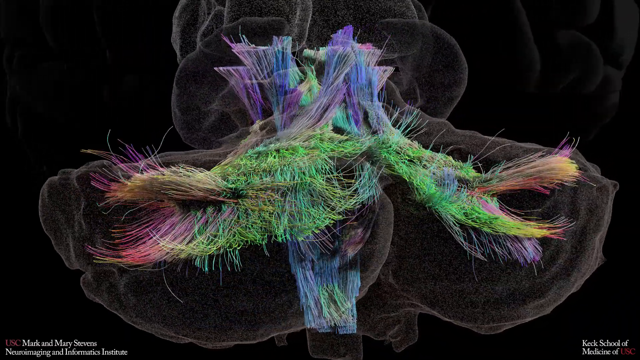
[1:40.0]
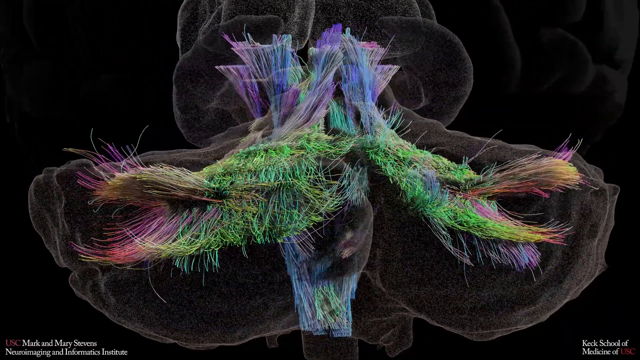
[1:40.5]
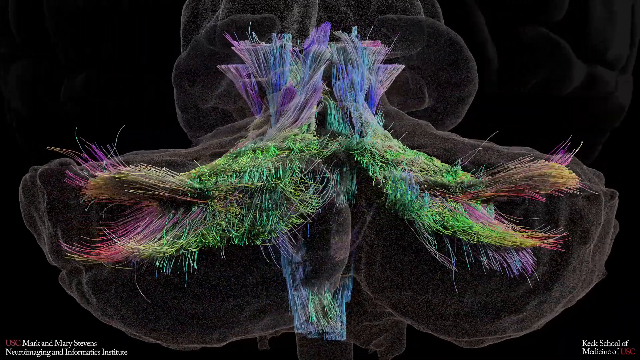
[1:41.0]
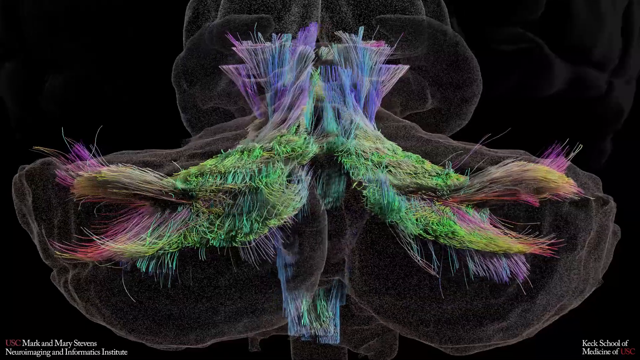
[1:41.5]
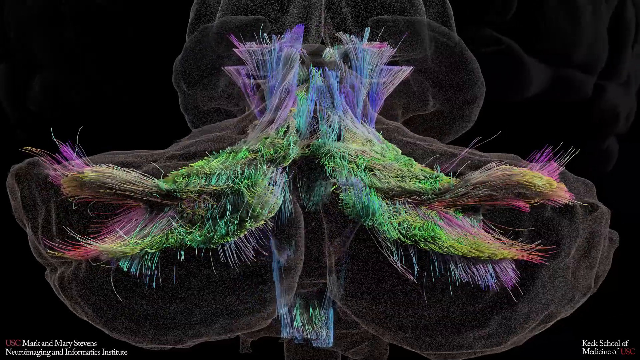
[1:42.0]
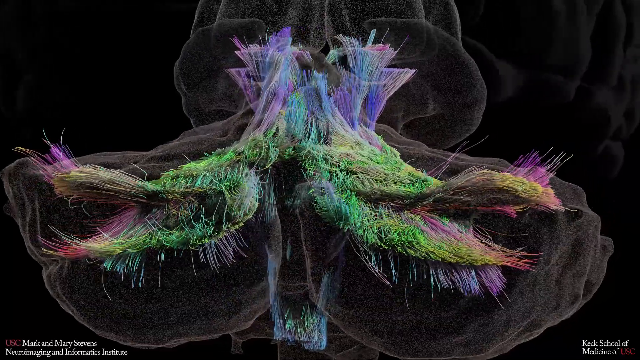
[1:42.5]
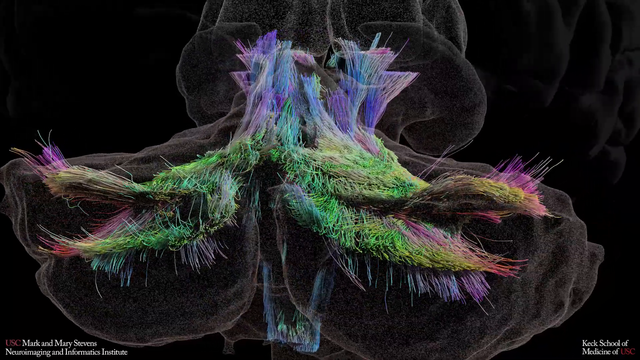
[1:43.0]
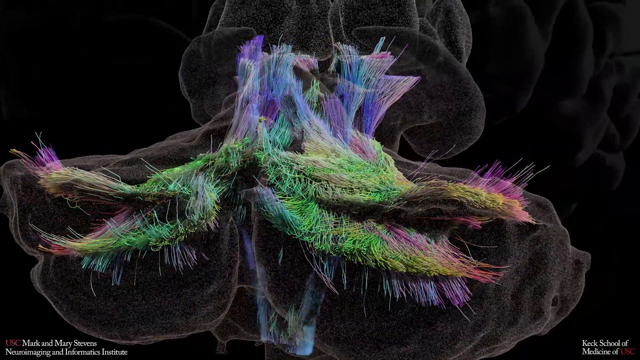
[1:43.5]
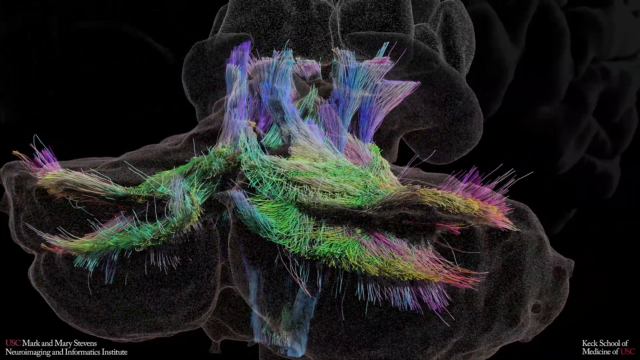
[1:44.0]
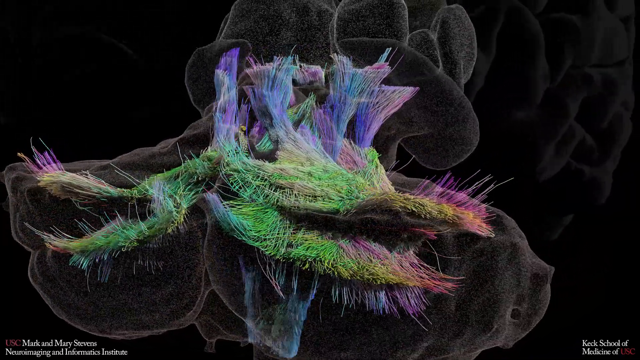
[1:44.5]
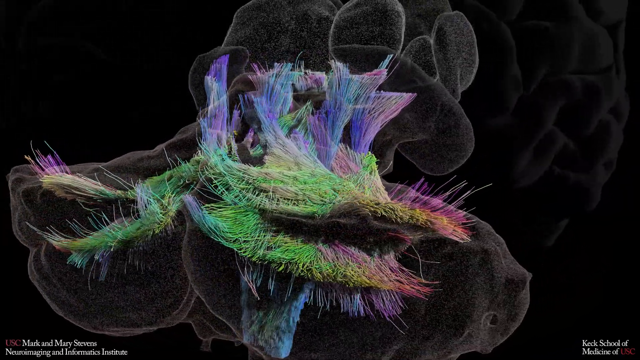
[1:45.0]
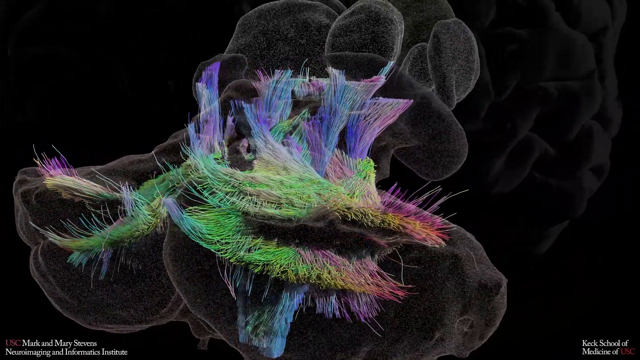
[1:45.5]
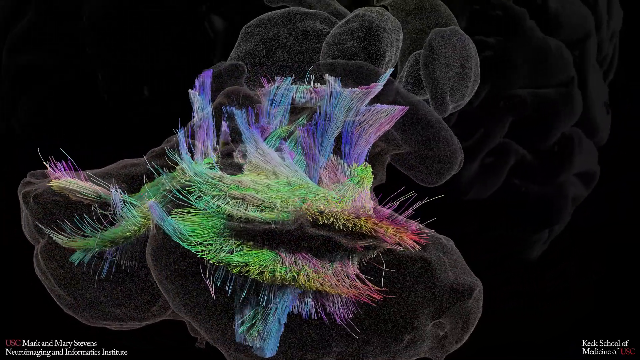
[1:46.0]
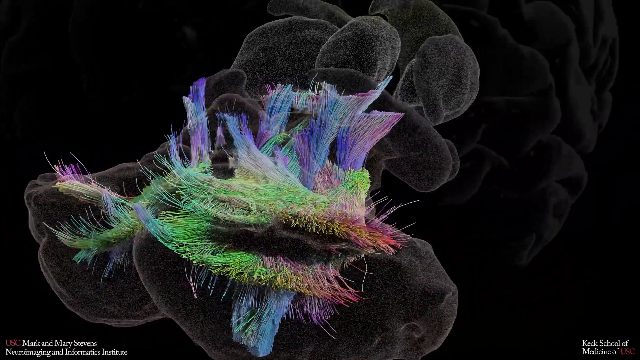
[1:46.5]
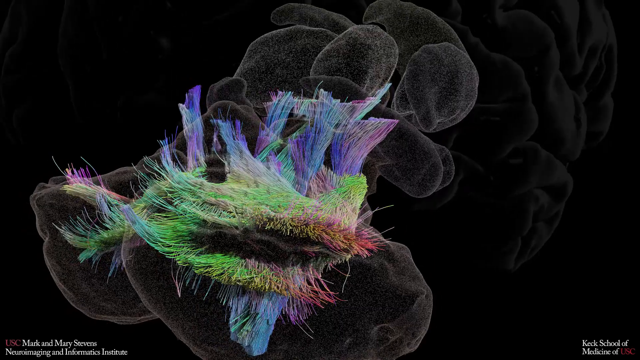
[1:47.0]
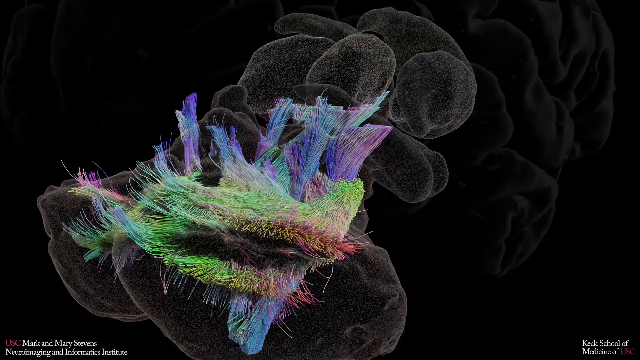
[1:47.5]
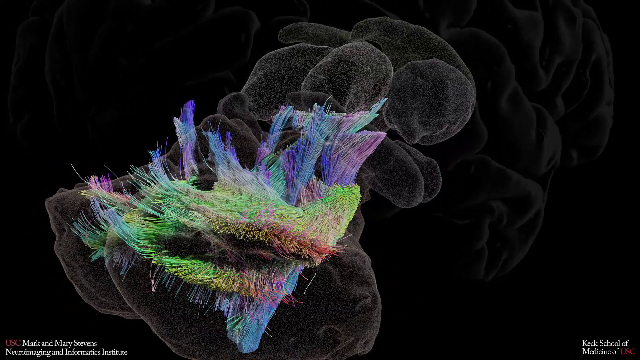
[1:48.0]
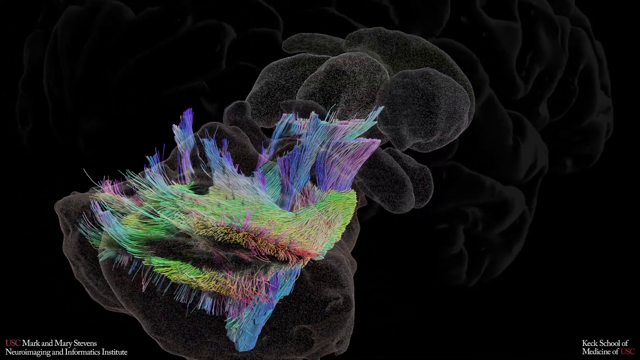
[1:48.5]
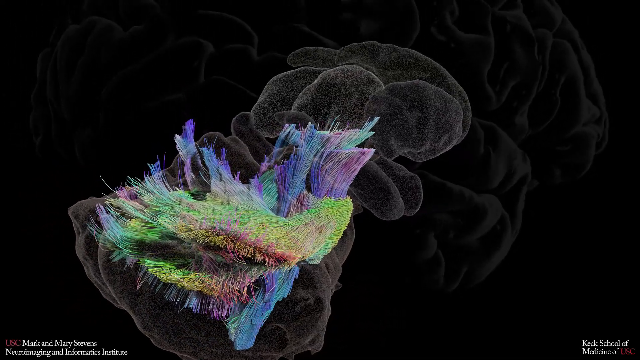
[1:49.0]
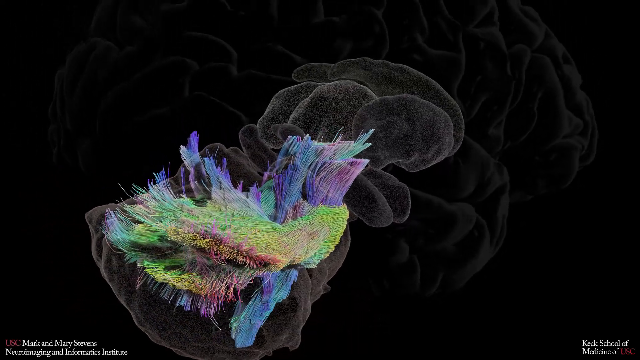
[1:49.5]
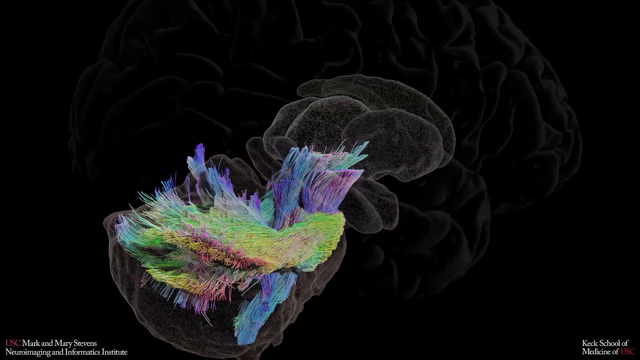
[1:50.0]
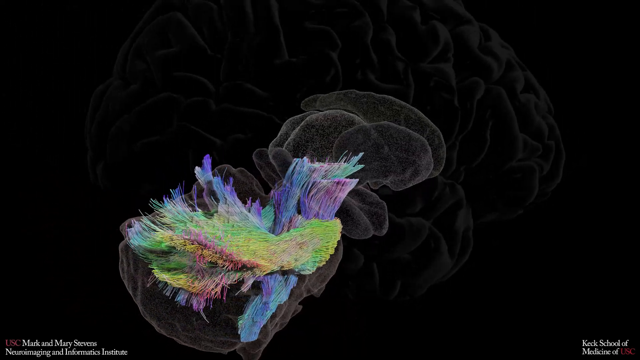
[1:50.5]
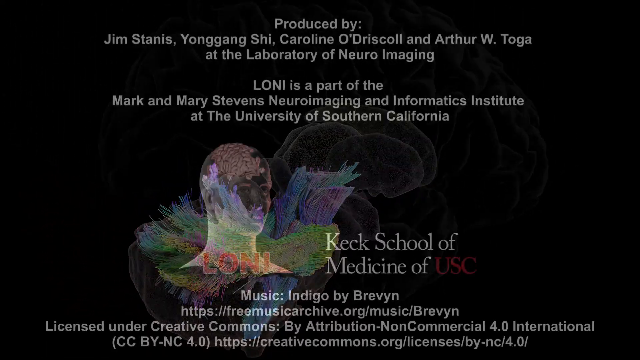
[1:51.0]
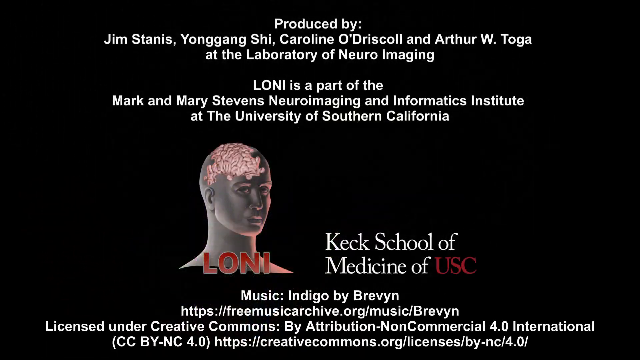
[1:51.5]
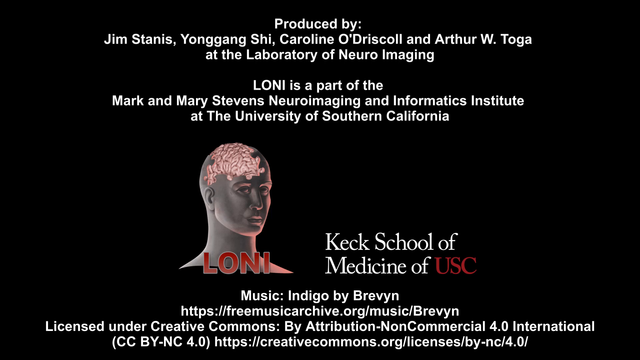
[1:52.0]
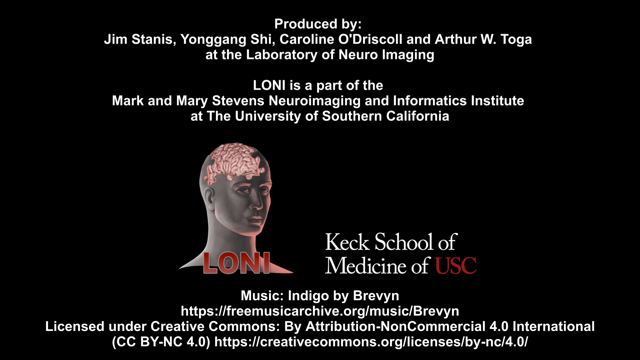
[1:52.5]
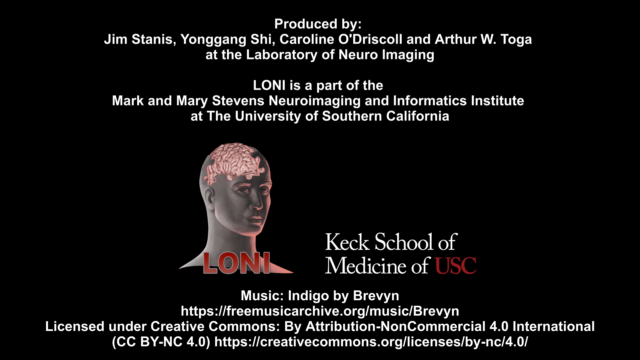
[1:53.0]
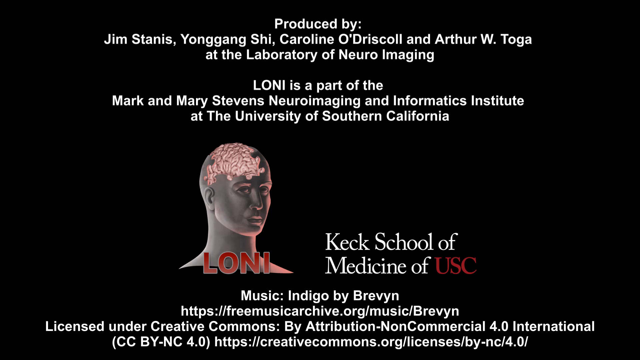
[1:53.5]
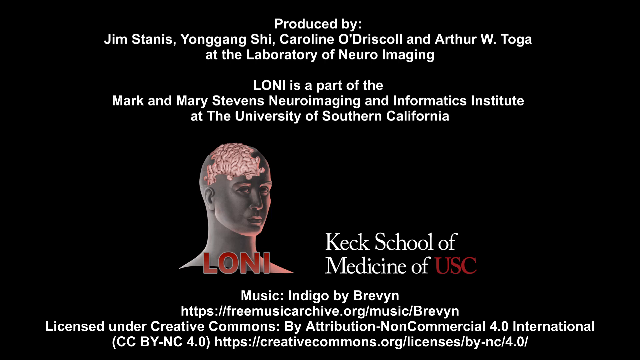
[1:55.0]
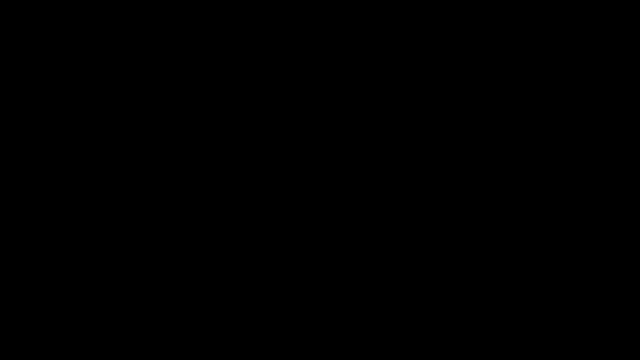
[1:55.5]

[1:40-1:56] A gray part of a brain contains multicolored fibers in blue, purple, green, yellow, pink, orange and other colors, against a dark background with some brain toward the top right corner. The camera spins to show more areas of the brain, and text at the bottom reads "UMC Mark and Mary Stevens." As the camera keeps spinning, all the differently colored fibers are visible. Then a black screen appears with white text reading "produced by Jim Stanis, Yong Gang Shi, Caroline O'Driscoll, and Arthur W. Toga at the Laboratory of Neuroimaging. Loni is a part of the Mark and Mary Stevens Neuroimaging and Informatics Institute at the University of Southern California. Loni, Keck School of Medicine of USC. Music, Indigo by Brevin," along with a link, "HTTPS freemusicarchive.org/music/Brevin," and "Licensed under Creative Commons by Attribution Non-Commercial 4.0 International CC by NC 4.0. HTTPS creativecommons.org/licenses/by NC/4.0."